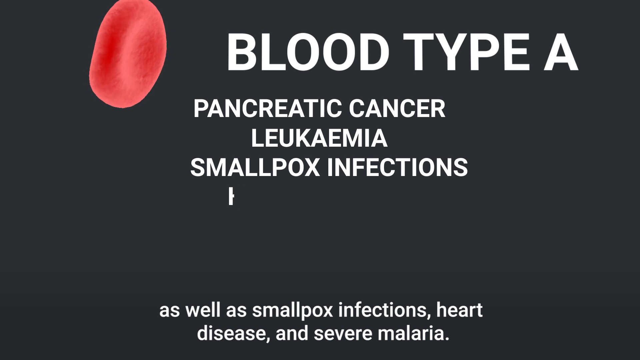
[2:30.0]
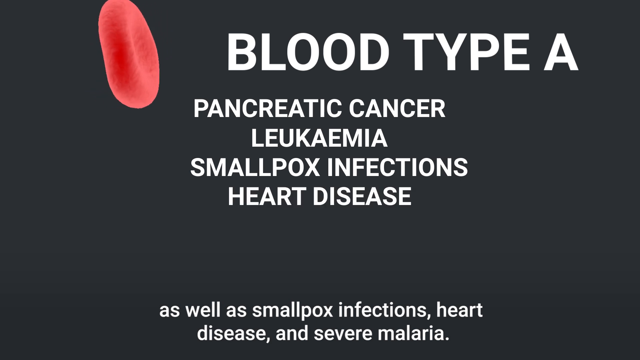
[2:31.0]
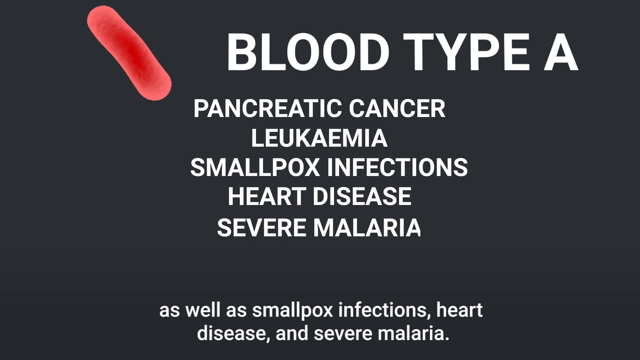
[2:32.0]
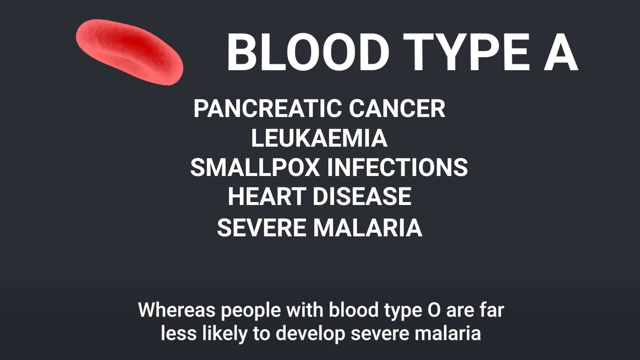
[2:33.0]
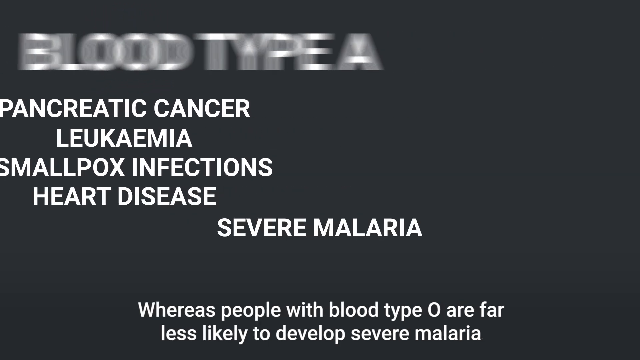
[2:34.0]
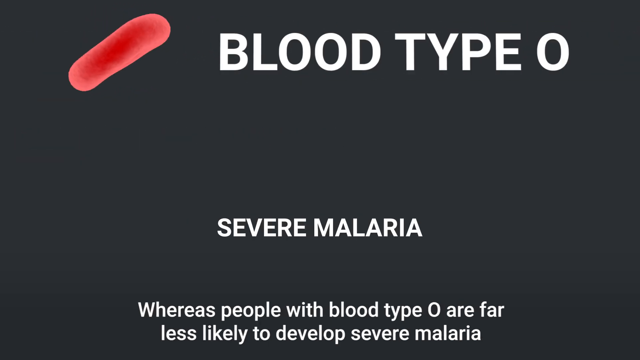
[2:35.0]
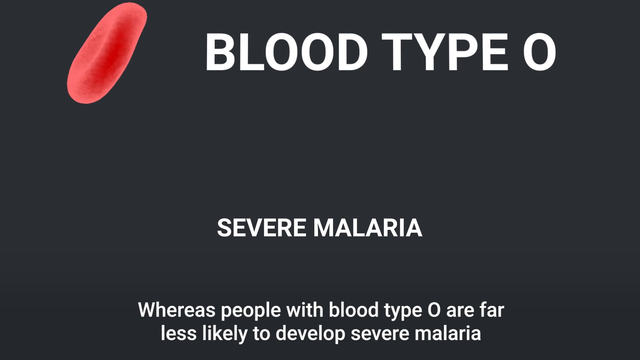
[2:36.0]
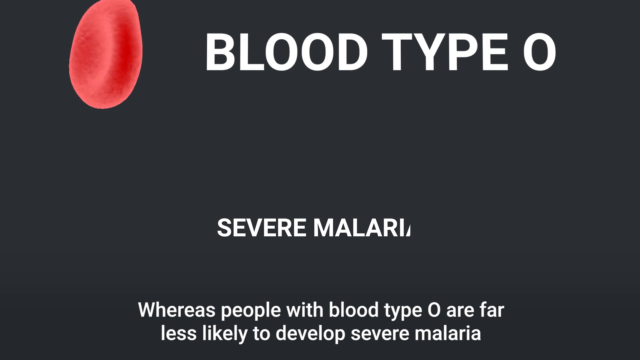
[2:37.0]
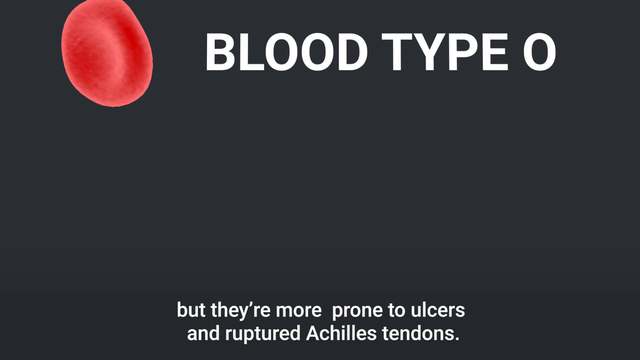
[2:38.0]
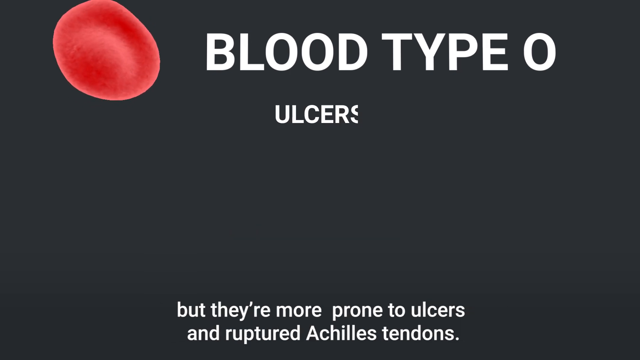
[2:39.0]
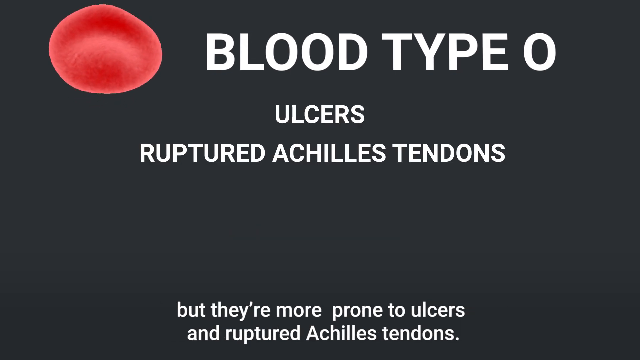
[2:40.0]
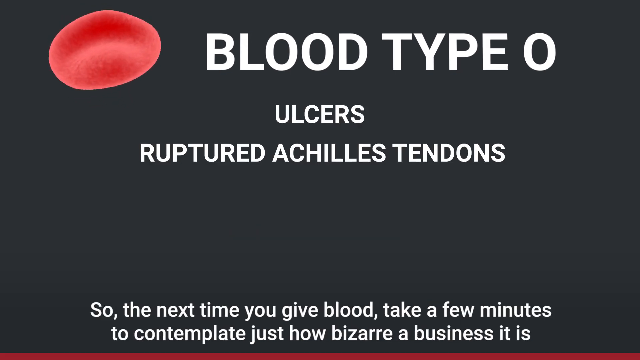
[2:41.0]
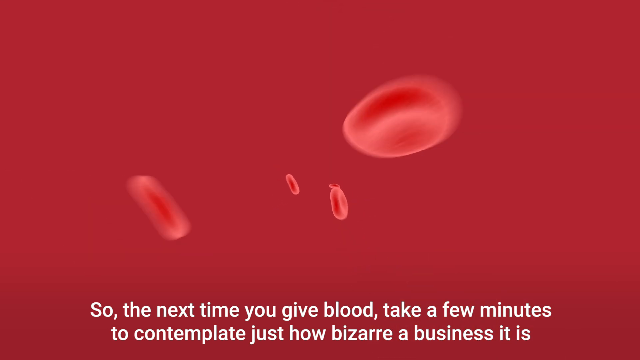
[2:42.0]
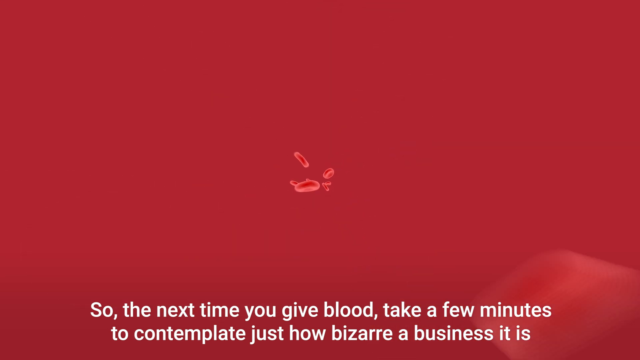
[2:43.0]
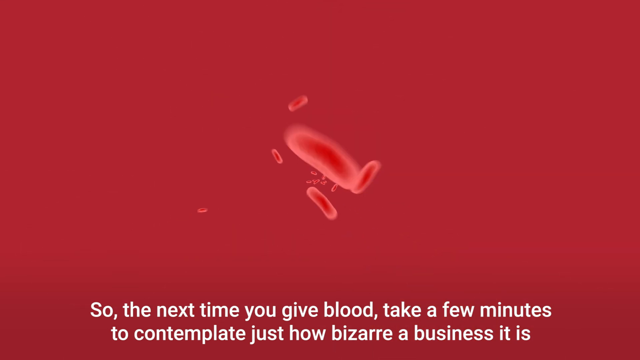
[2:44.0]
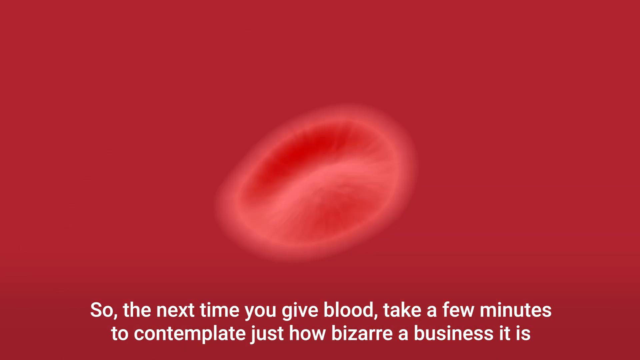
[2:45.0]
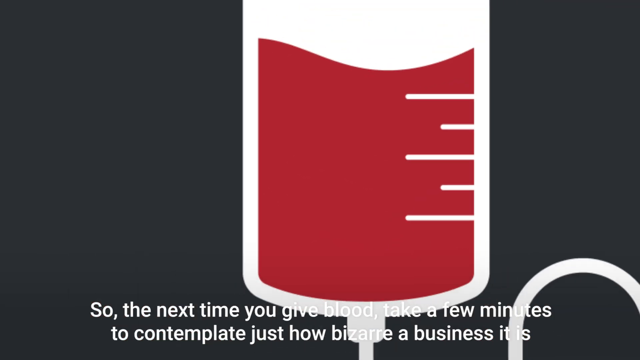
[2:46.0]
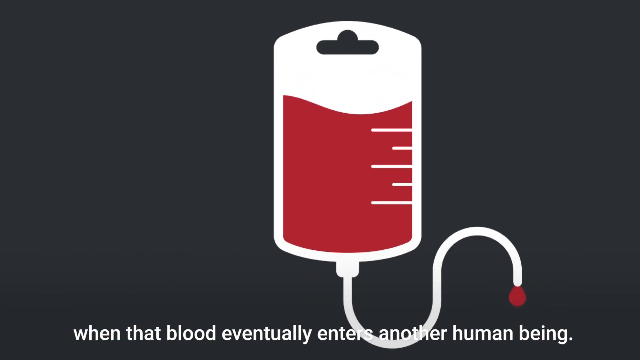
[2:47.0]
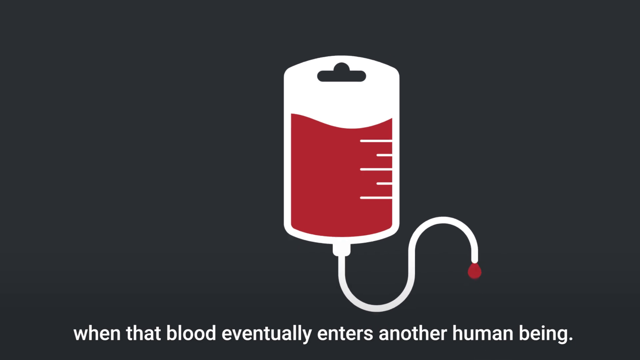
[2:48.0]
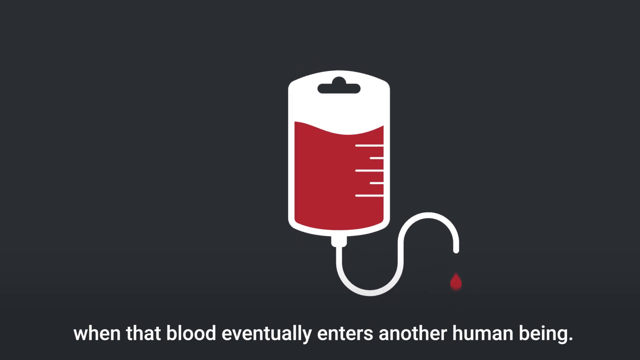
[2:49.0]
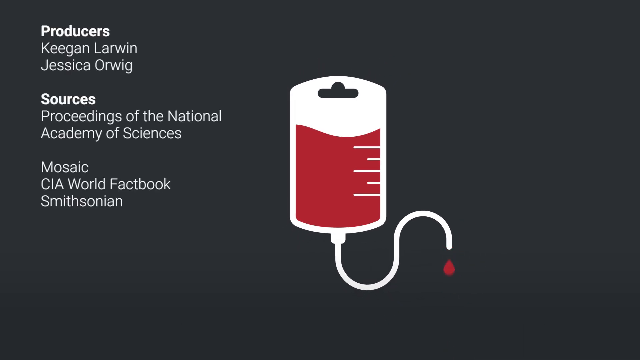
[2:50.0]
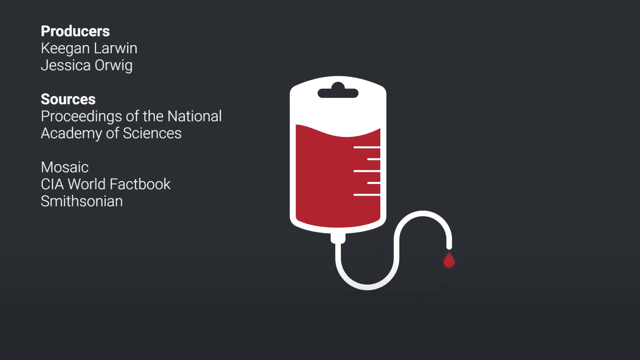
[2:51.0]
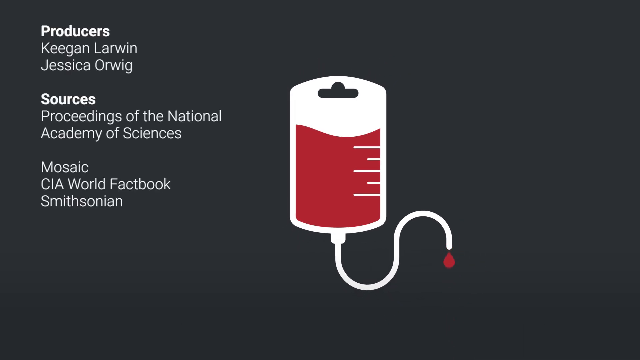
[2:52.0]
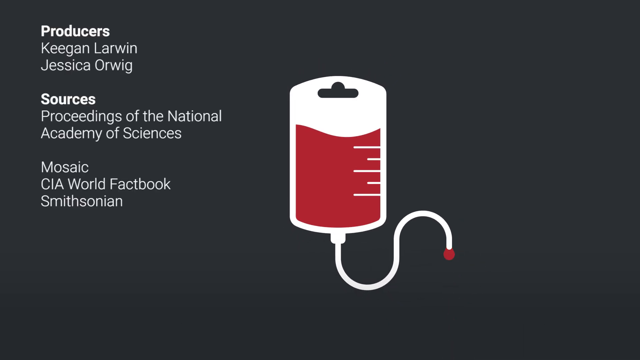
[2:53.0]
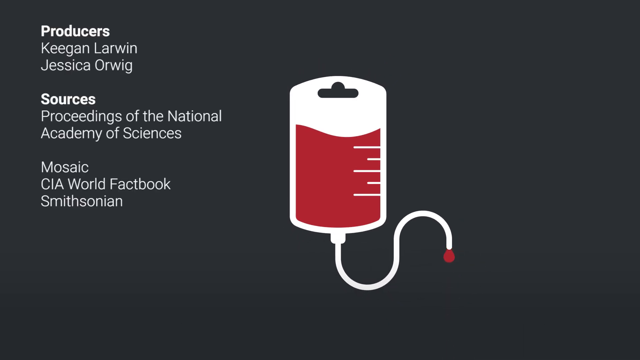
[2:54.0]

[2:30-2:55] Big text at the top says "blood type A," along with "pancreatic cancer, leukemia, smallpox infections, and heart disease." The text then says "for instance, people with blood type A are at a higher risk for some forms of pancreatic cancer and leukemia, and even severe malaria, whereas people with blood type O are far less likely to develop severe malaria, but they're more prone to ulcers and ruptured Achilles tendons. So next time you give blood, take a few minutes to contemplate just how bizarre a business it is when that blood eventually enters another human being." The video ends with an animation of a 2D blood pack leaking blood out where it would go into someone.